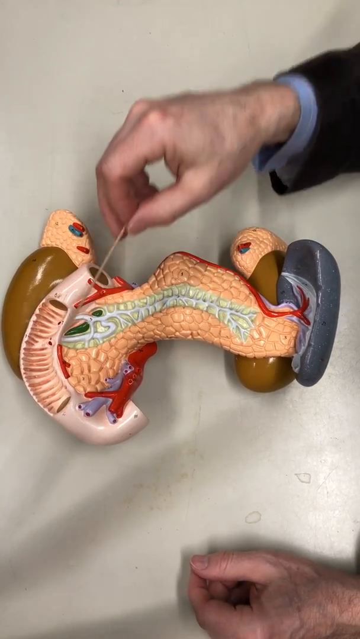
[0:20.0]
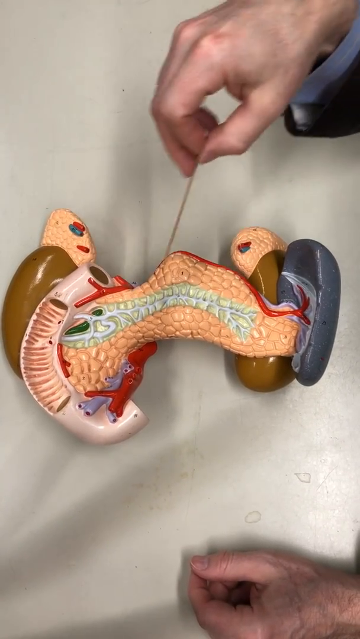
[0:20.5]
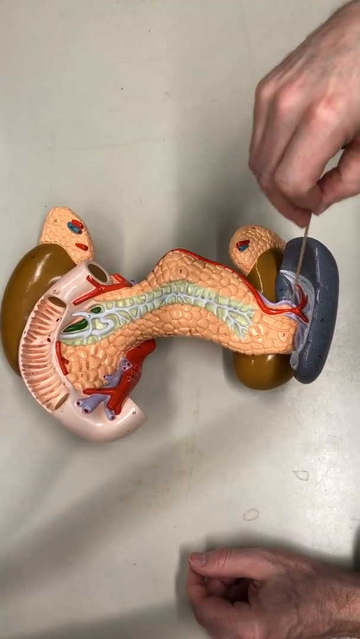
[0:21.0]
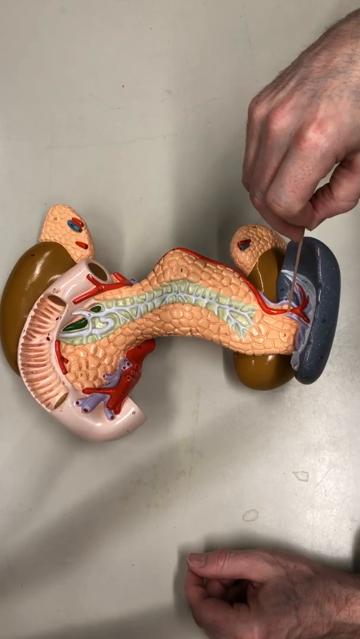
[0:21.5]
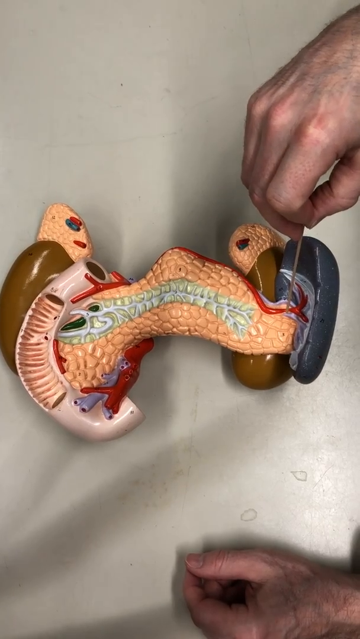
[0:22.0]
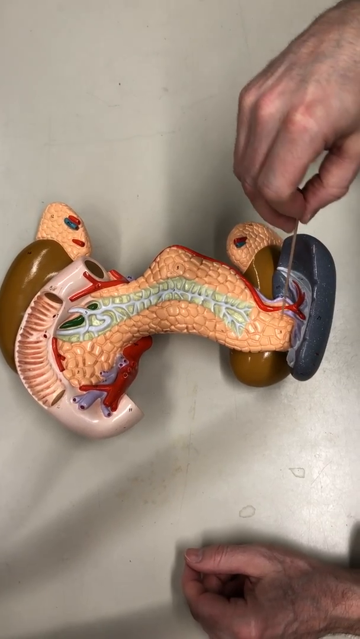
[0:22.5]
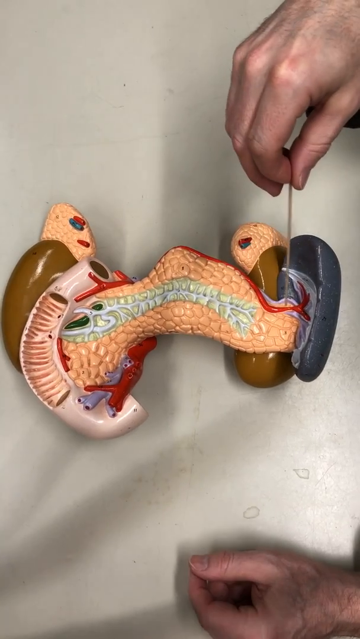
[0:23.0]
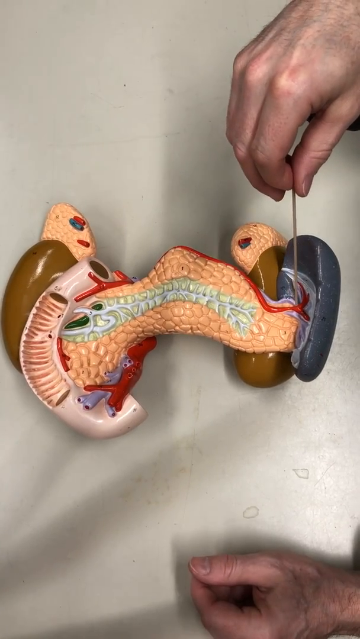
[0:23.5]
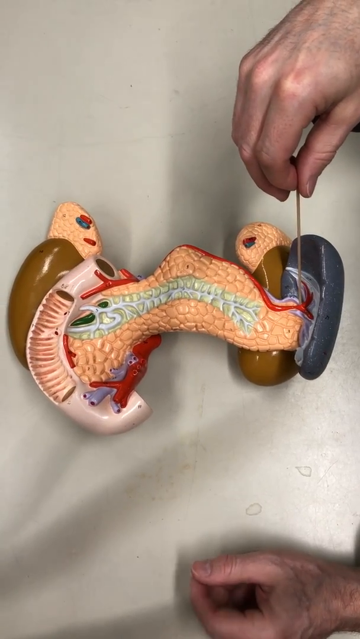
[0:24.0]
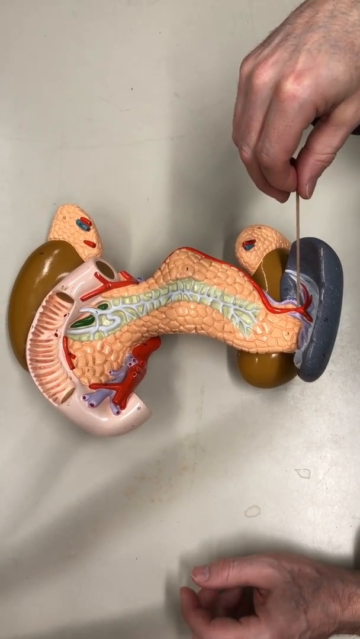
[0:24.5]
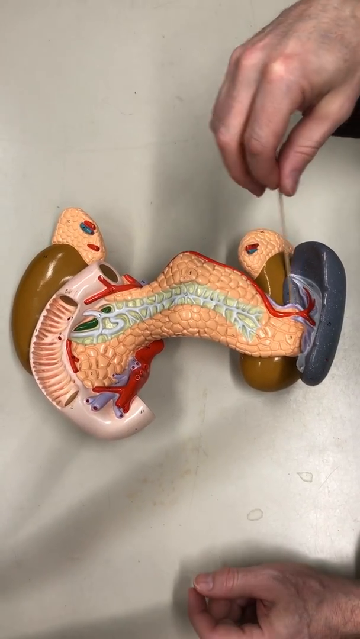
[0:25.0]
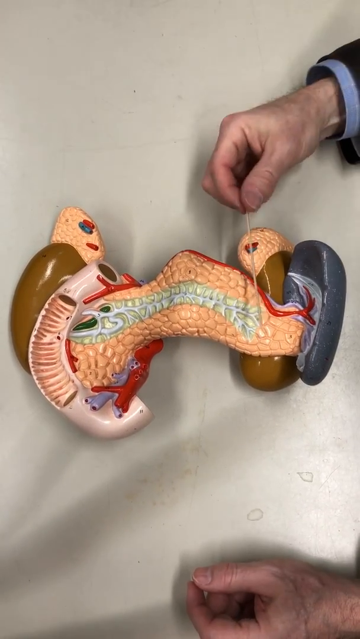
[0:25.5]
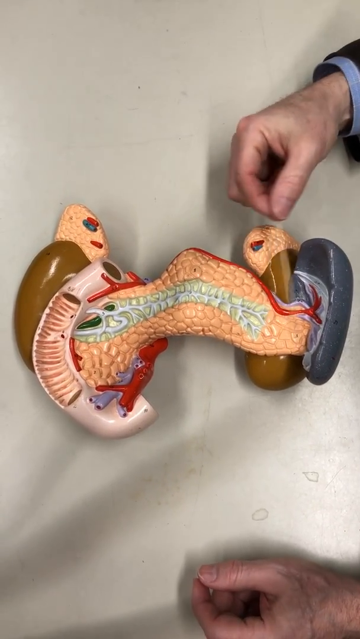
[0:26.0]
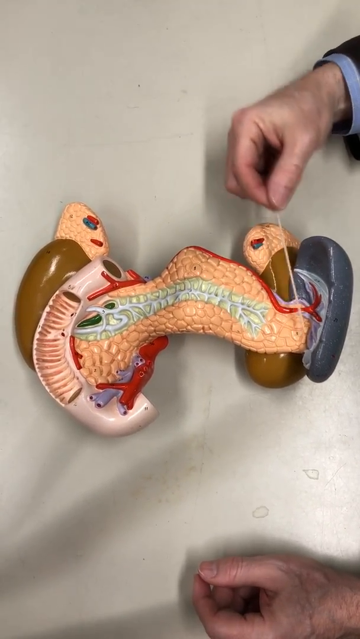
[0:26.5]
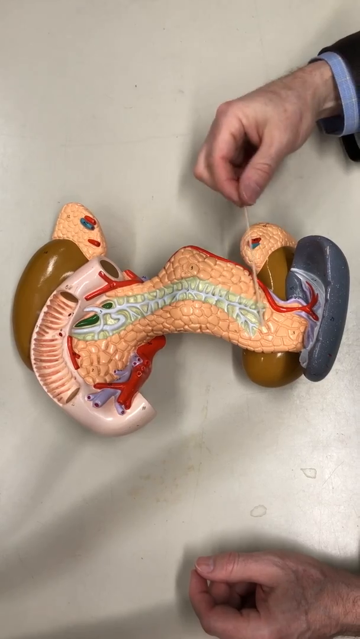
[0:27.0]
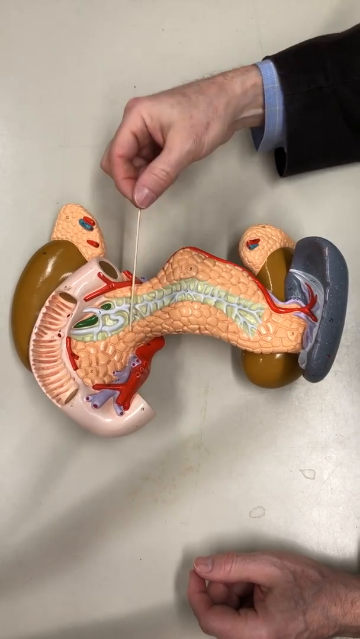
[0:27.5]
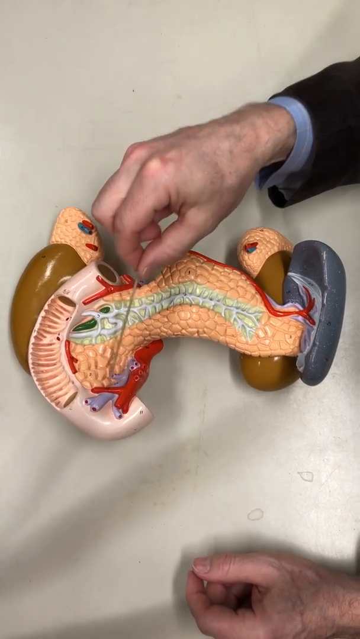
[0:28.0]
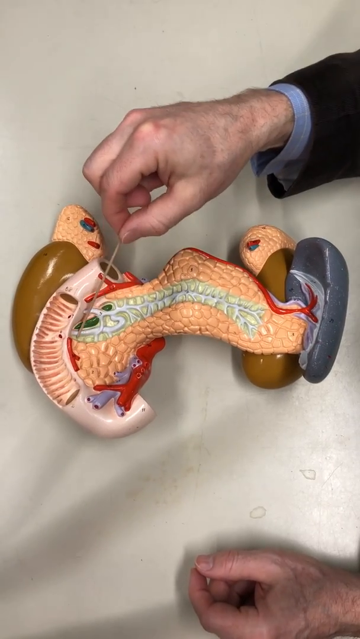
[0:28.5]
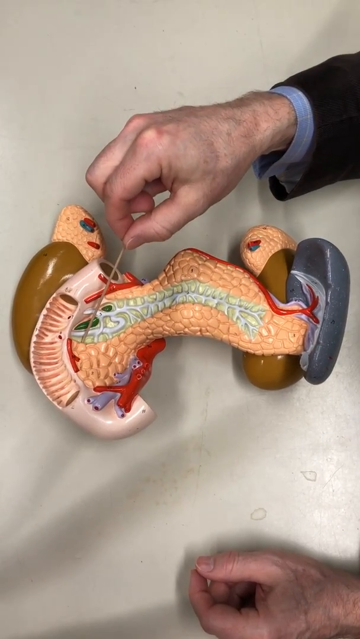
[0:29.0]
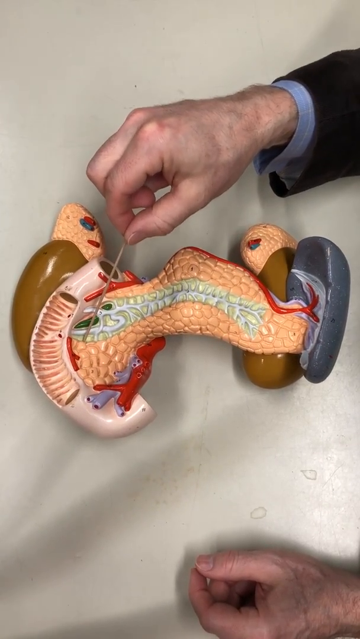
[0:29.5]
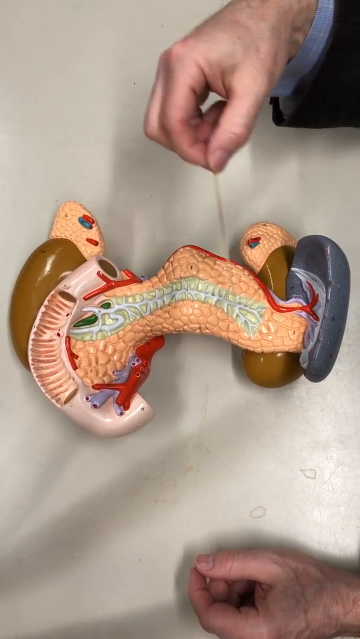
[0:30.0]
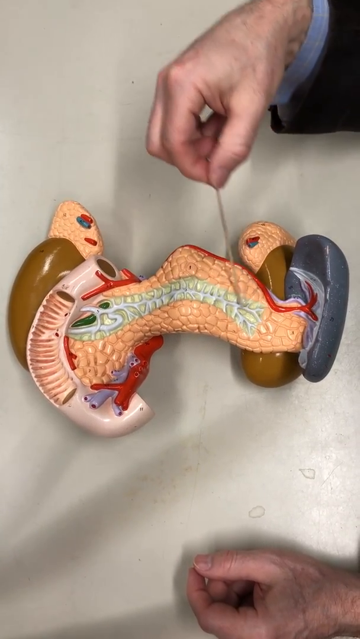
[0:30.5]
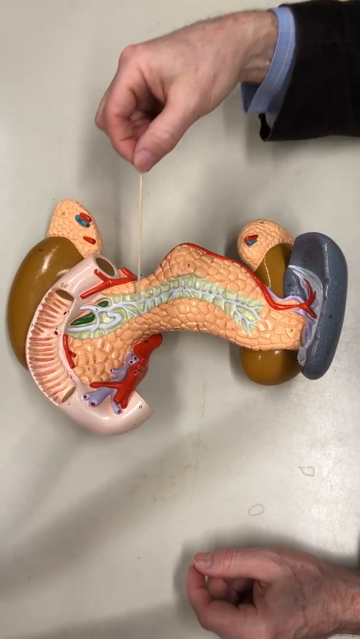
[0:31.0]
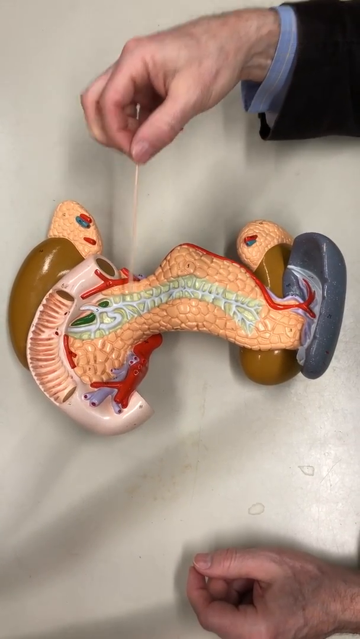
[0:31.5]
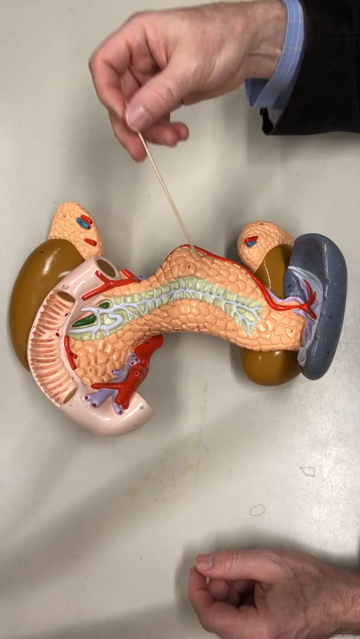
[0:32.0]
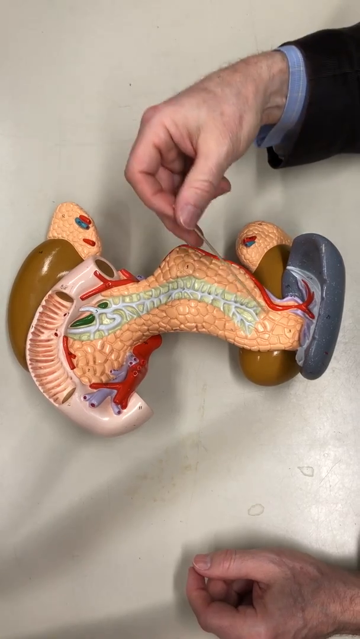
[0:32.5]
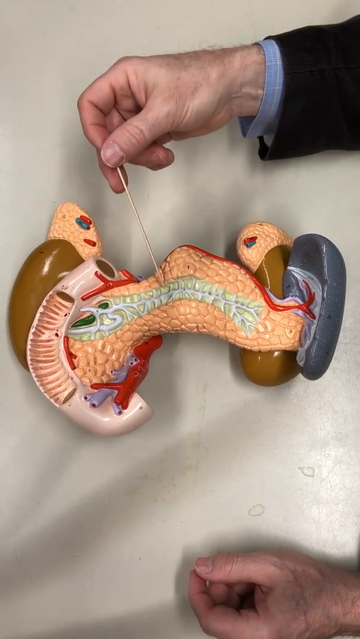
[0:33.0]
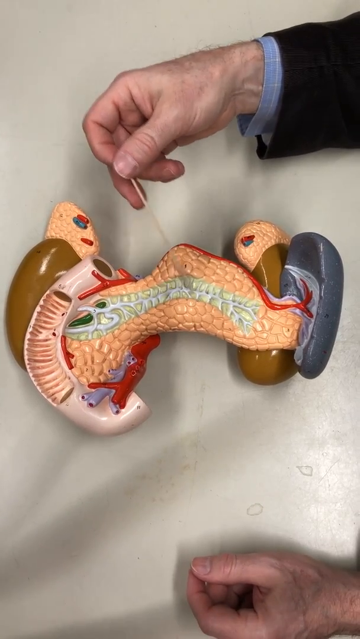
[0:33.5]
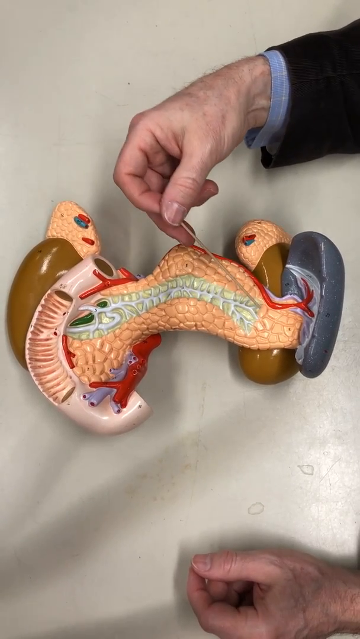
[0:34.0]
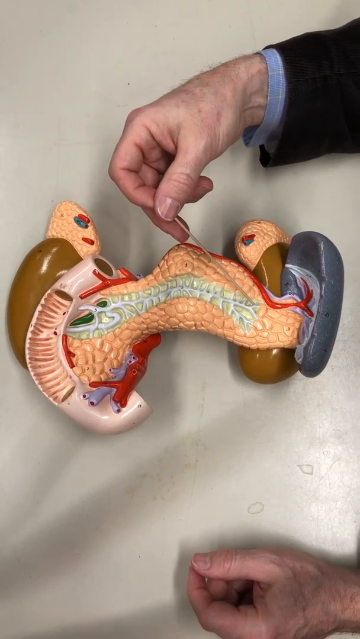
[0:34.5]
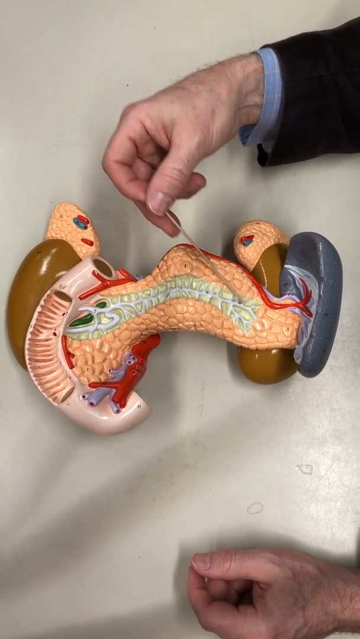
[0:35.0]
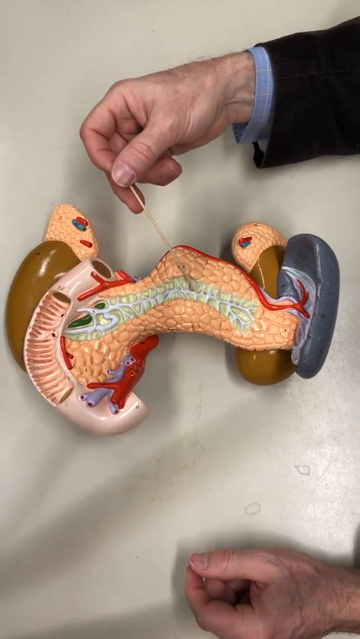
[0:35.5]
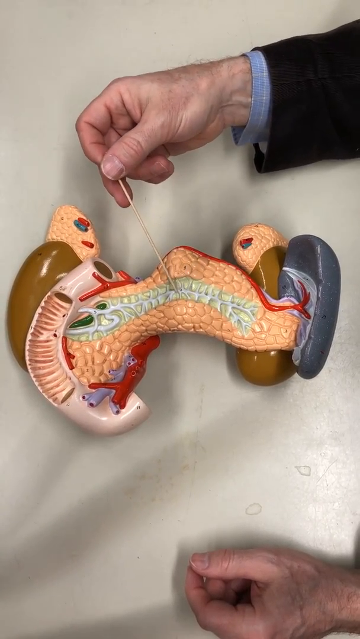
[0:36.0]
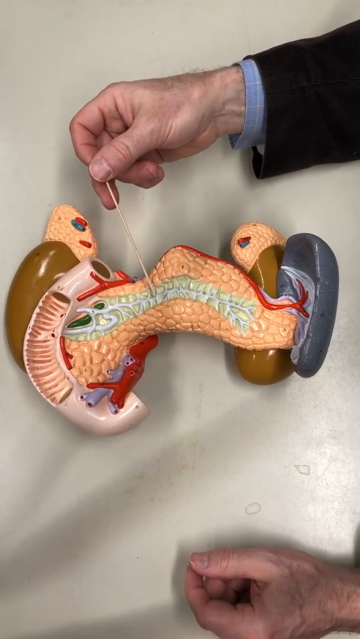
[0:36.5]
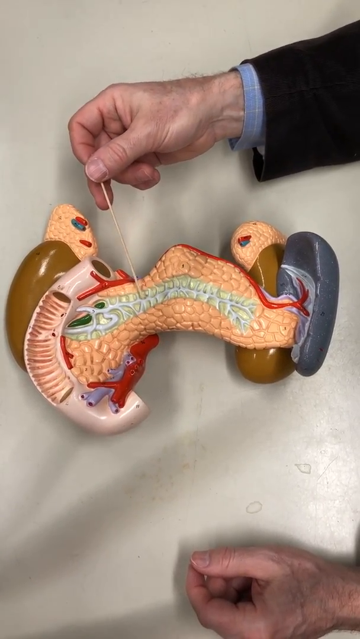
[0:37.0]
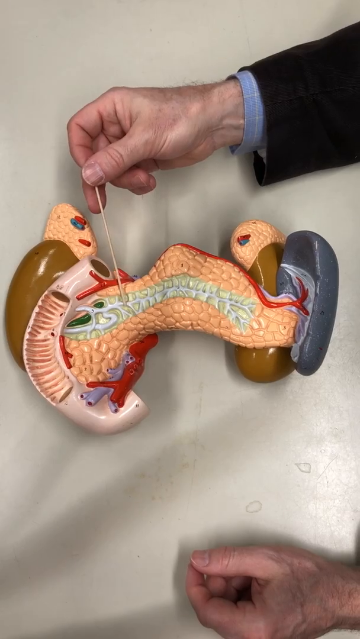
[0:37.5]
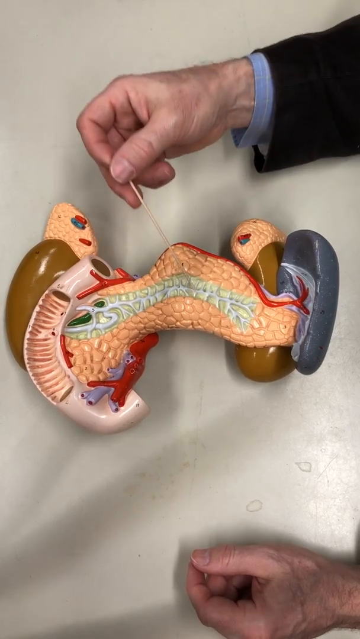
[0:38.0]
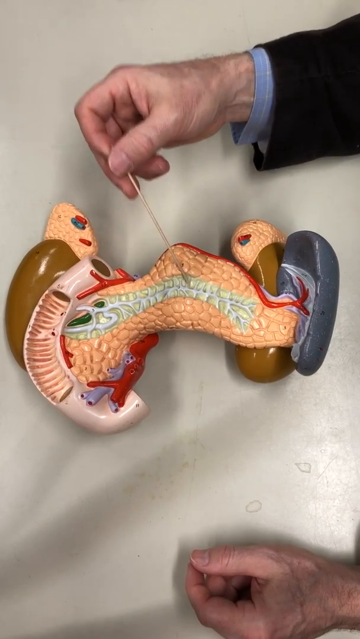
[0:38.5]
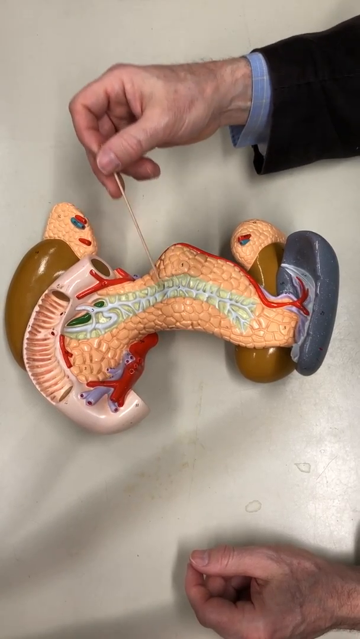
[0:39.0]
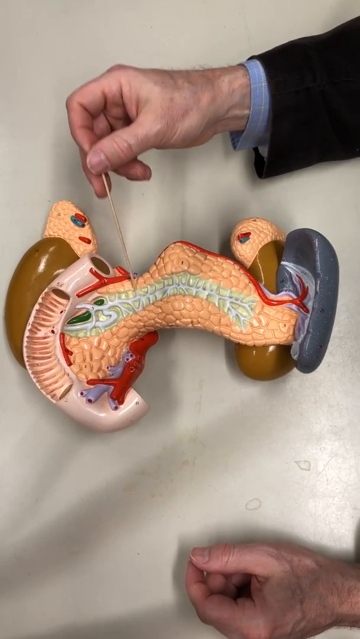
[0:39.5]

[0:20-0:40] The hand continues to point at a specific part and keeps moving to different parts, apparently explaining what each one is and what it does. There is something that looks like a spinal cord, and the hand points to several parts of it. It then points to what look like valves. The object looks like a human heart, with valves shown in the liver and other parts, and there are also facial features that look like heads. A single hand, belonging to someone in a blue shirt and a black coat, does the explaining. It is possibly a classroom life-sciences lesson about the human heart.